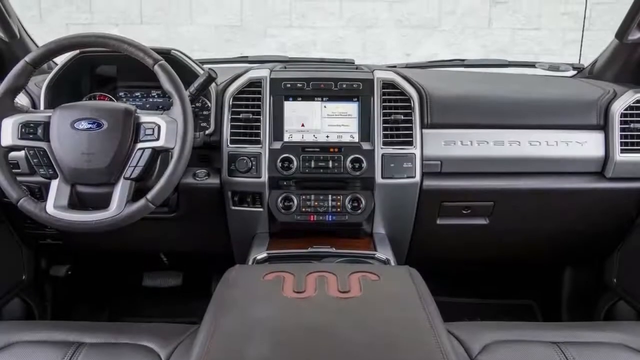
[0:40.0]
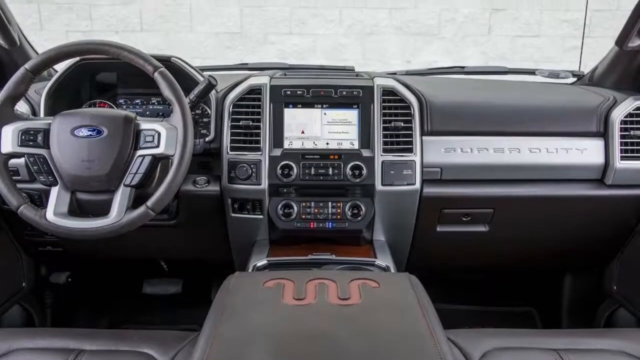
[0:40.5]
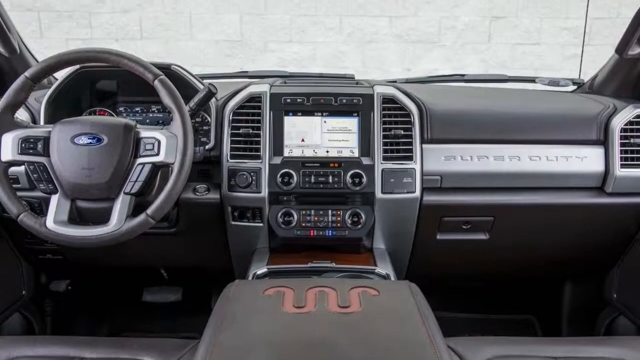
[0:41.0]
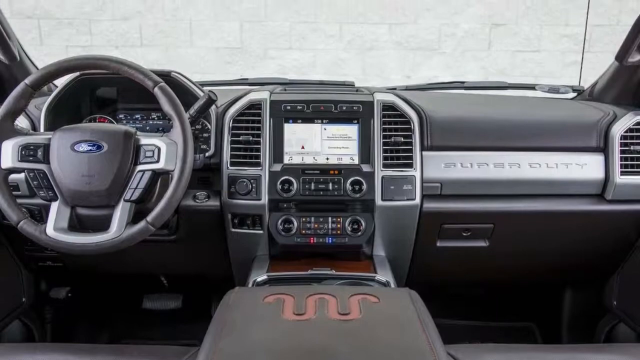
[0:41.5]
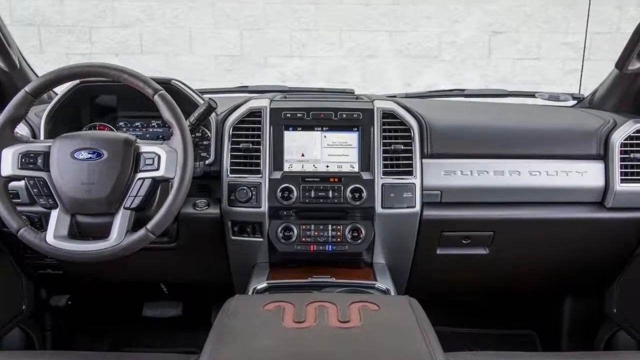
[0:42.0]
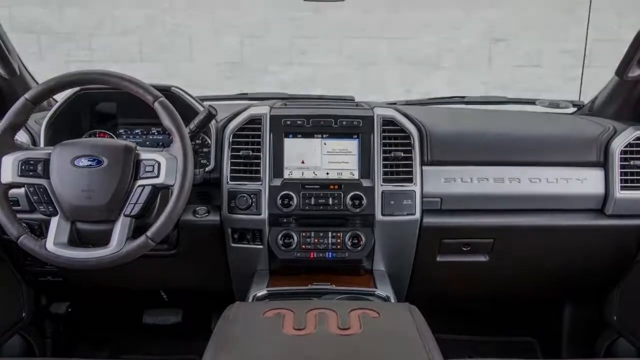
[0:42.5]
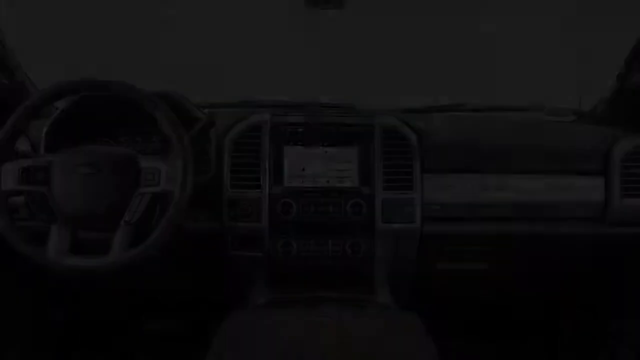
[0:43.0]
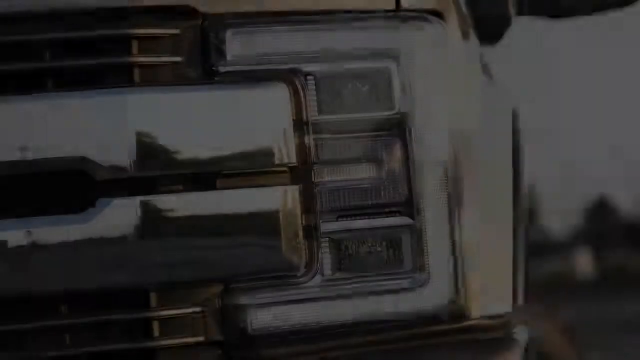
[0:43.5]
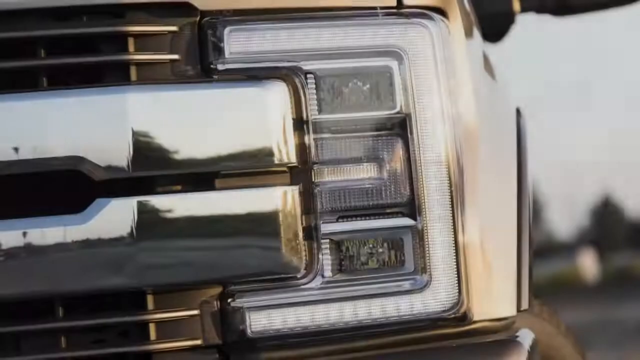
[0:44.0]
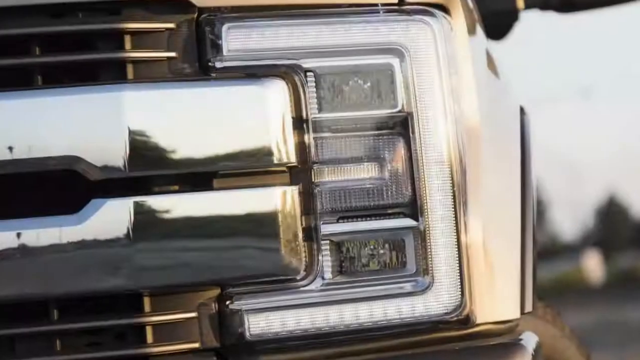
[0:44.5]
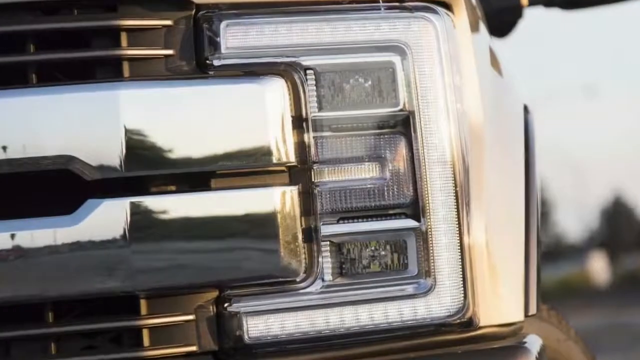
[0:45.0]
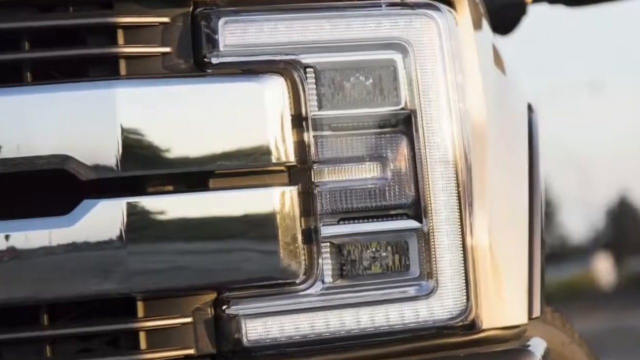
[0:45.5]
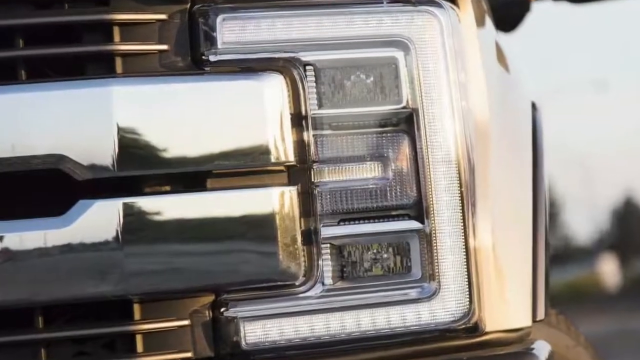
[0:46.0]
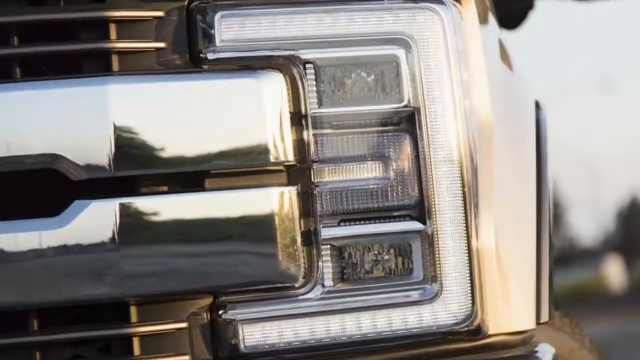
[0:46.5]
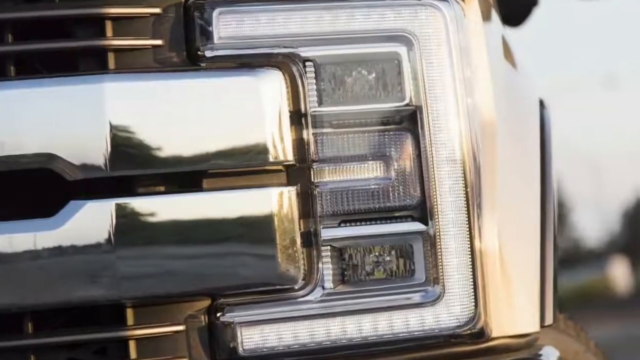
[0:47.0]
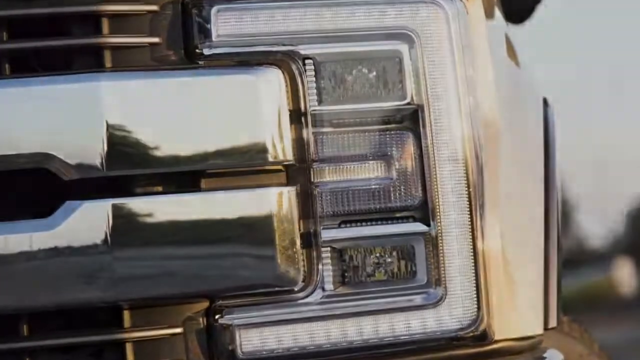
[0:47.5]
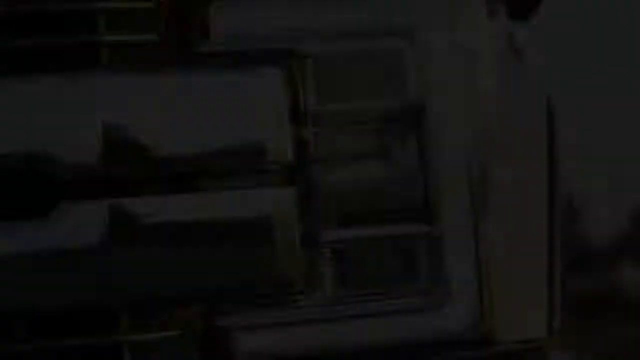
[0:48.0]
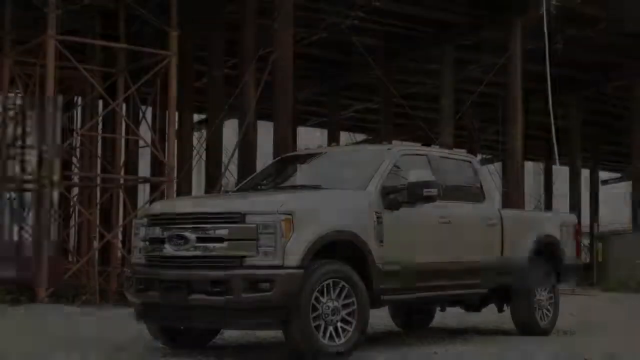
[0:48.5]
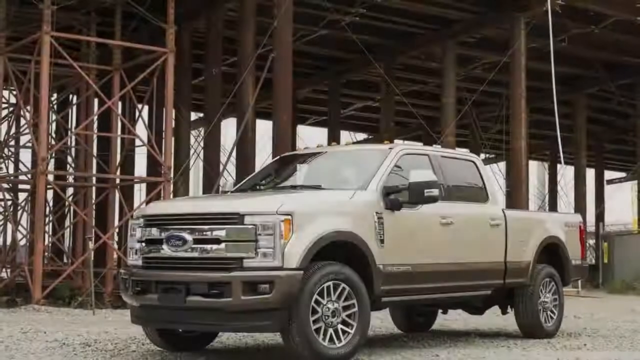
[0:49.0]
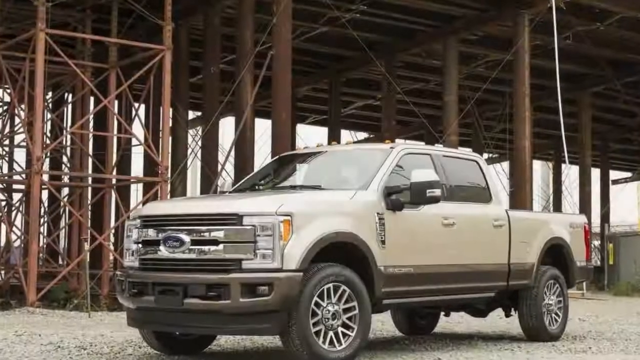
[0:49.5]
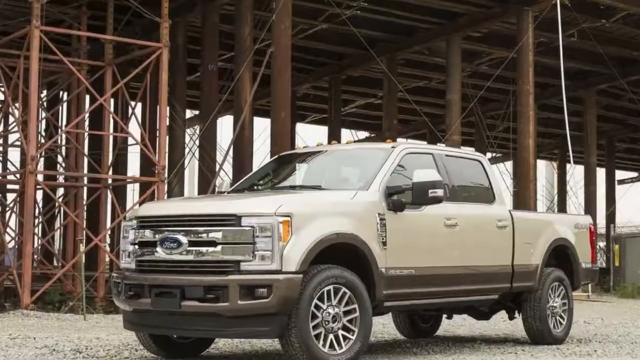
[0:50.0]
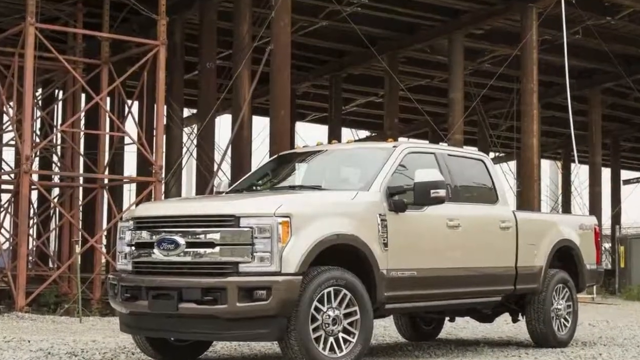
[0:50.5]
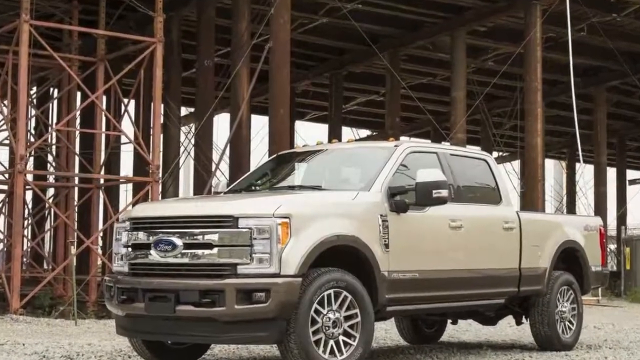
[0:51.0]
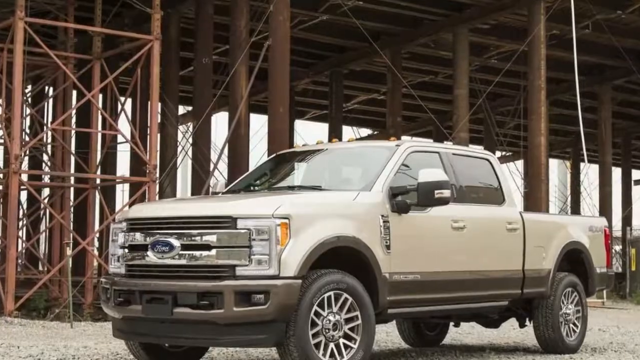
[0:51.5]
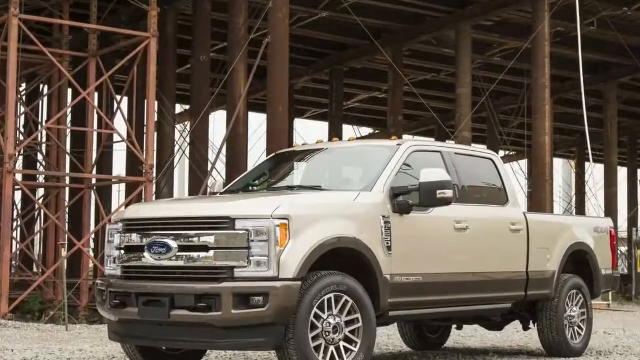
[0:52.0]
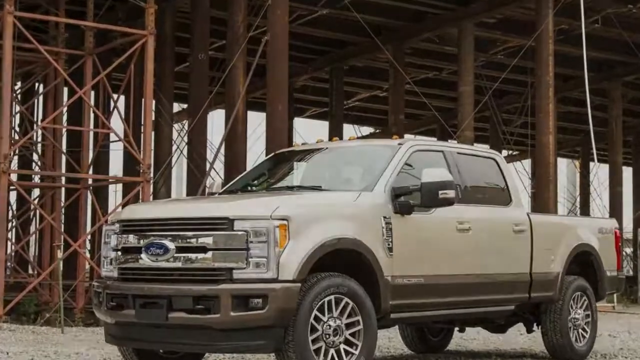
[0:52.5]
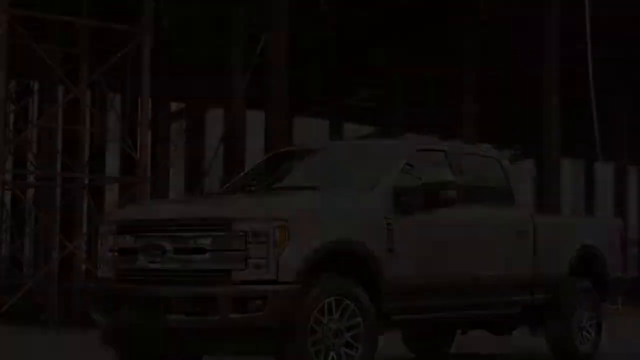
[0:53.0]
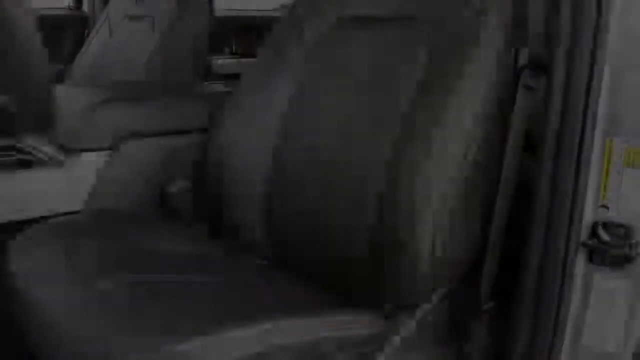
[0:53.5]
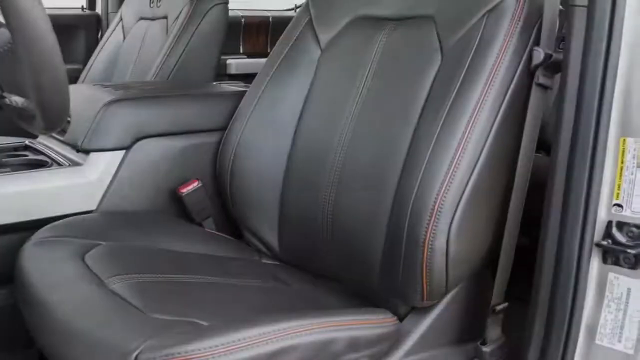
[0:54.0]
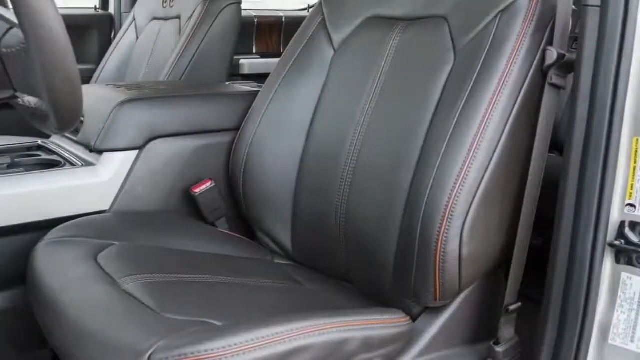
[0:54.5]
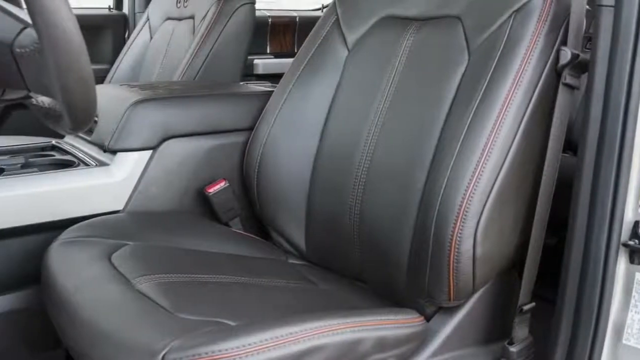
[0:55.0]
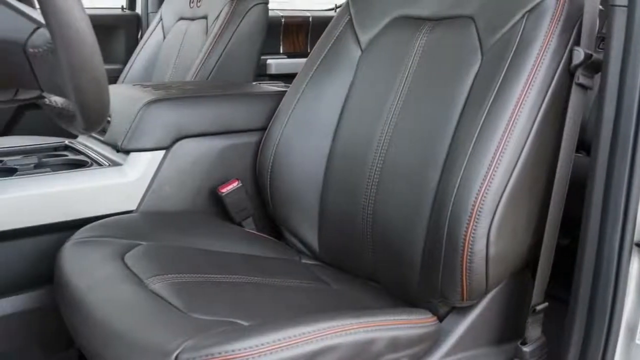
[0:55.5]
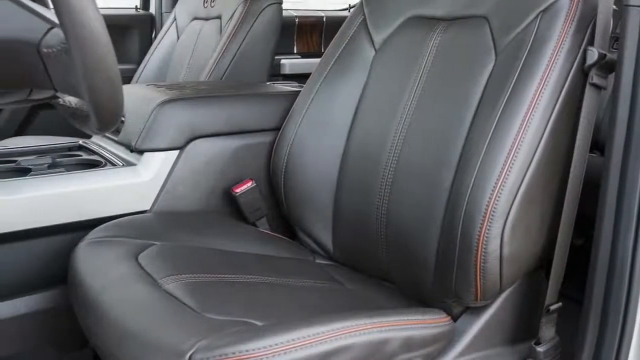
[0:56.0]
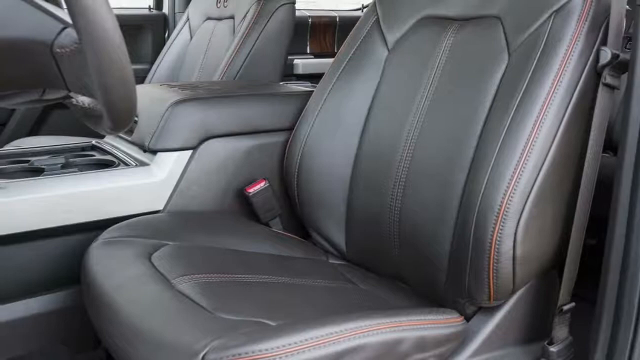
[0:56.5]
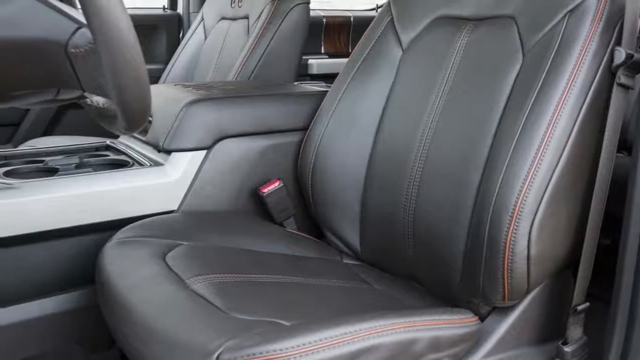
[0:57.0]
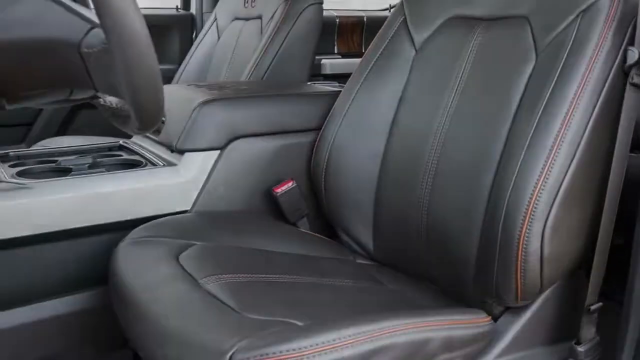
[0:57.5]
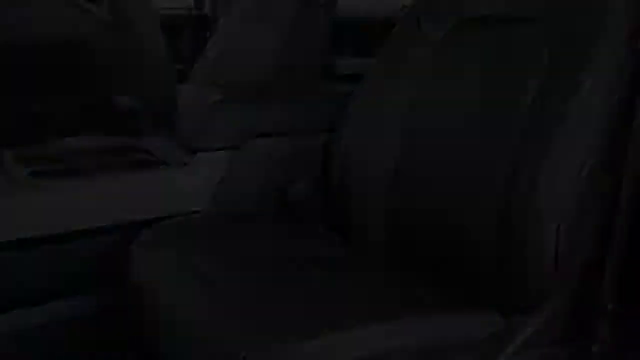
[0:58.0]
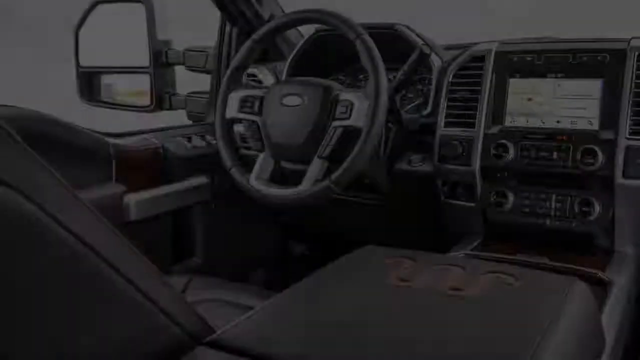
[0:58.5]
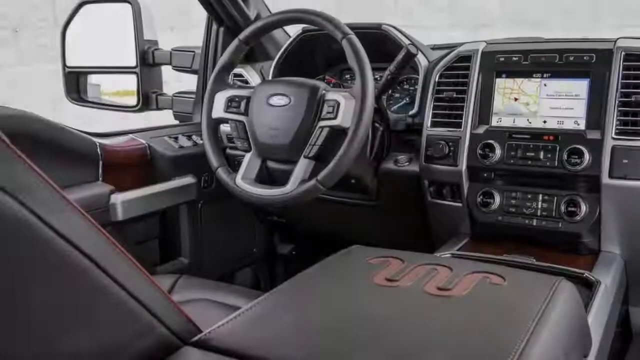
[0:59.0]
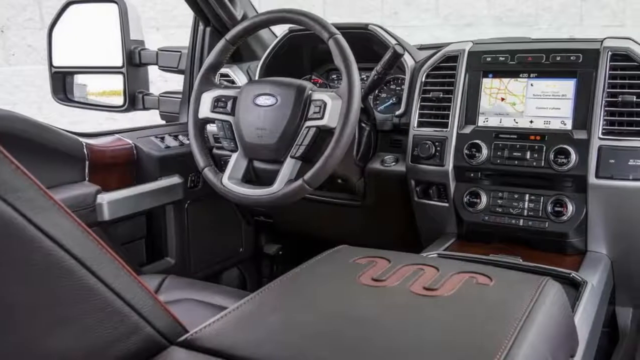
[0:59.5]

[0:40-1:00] The cockpit of the truck appears: a traditional left-hand-drive layout with a steering wheel that has three silver spokes and the Ford logo in the middle. In the middle of the dashboard is an infotainment system with an air-conditioning vent on either side, and a series of dials, knobs and buttons below it. There is a sort of central console with a red waving pattern that looks a little like a stylized snake. On the glovebox side, the words Super Duty are embossed in silver on a silver panel, with a lever to release the bonnet below it, and finally a silver-colored air-conditioning vent. The photograph scrolls upwards toward the windscreen. Next, a photograph focuses on the front headlight cluster: a rectangular cluster with an outer feature that looks like an inverted C shape and three lights in the middle of it, all going around the metallic feature that crosses the radiator grille. The image zooms in on it. The truck is then shown in front of the footings of what looks like a metallic bridge, with the image zooming in toward the truck. Then the seats inside the truck appear: the driver's seat is a kind of grey leather effect with red thread and a sort of piping, and a seatbelt buckle is visible. The image scrolls from right to left to show the passenger seat, the box in the central console and some cup holders. Then there is a view from the passenger seat over the driver's side, with the steering wheel in the middle and the infotainment system.